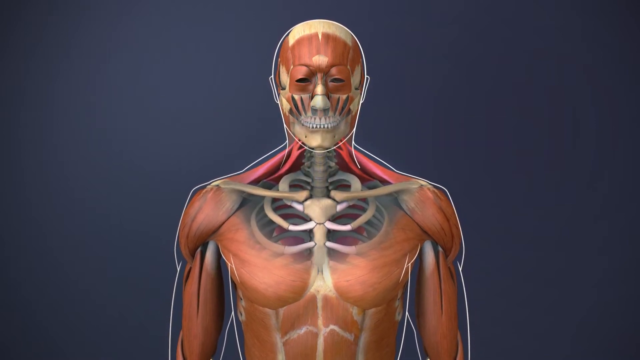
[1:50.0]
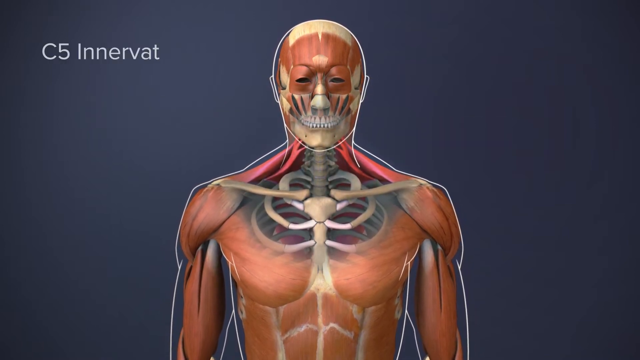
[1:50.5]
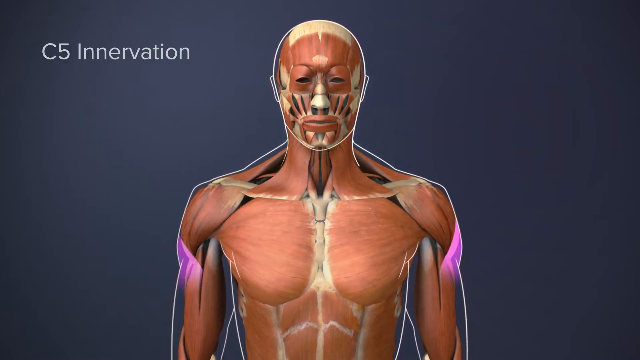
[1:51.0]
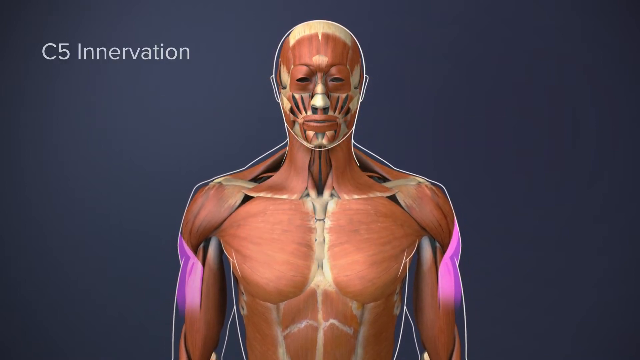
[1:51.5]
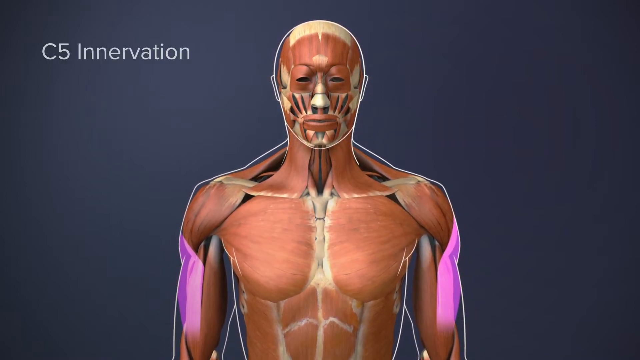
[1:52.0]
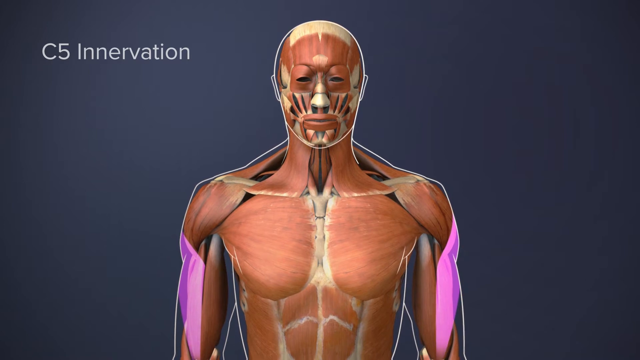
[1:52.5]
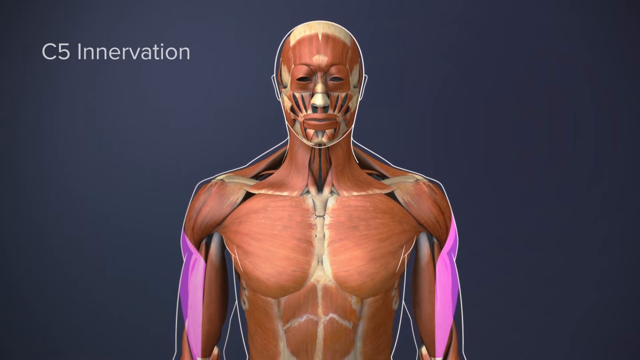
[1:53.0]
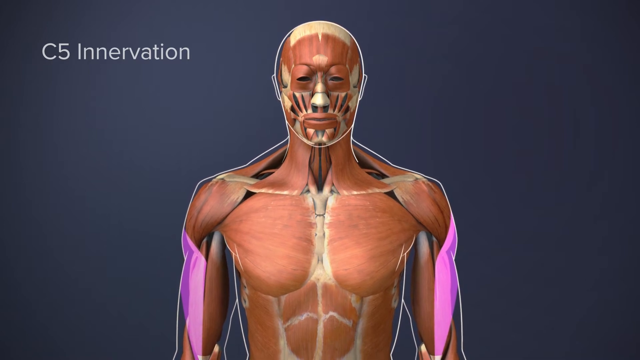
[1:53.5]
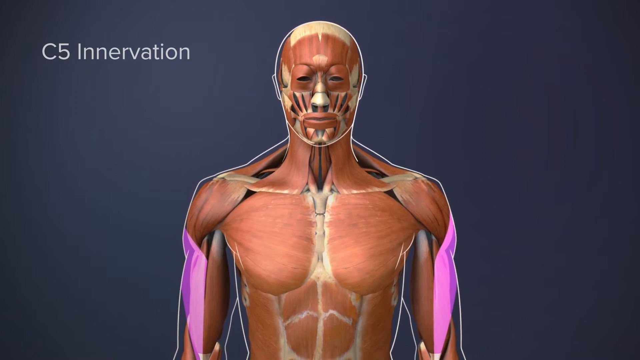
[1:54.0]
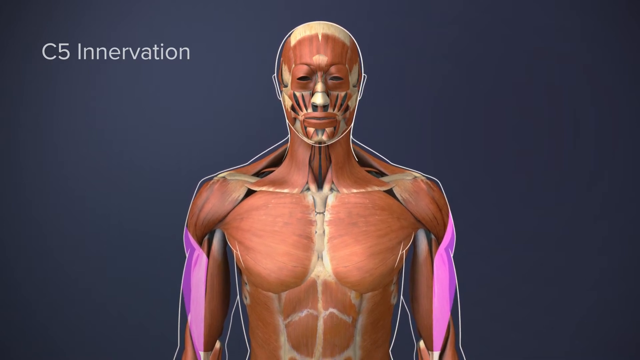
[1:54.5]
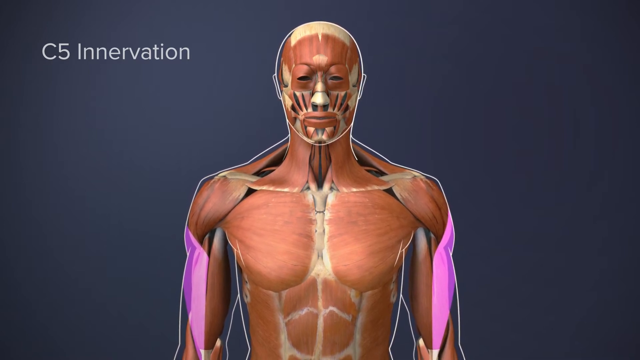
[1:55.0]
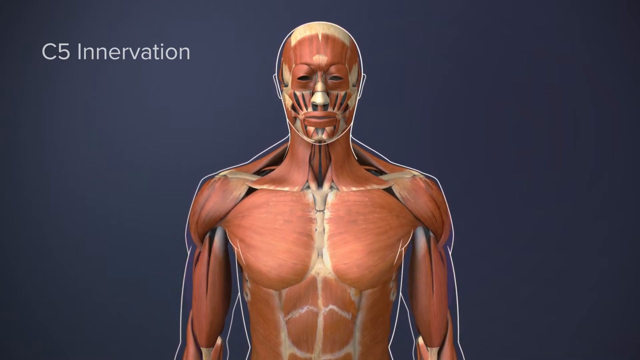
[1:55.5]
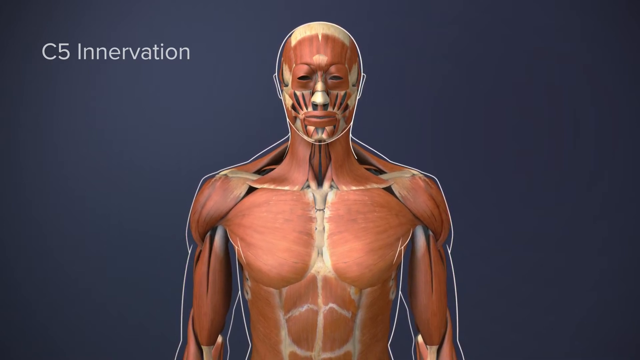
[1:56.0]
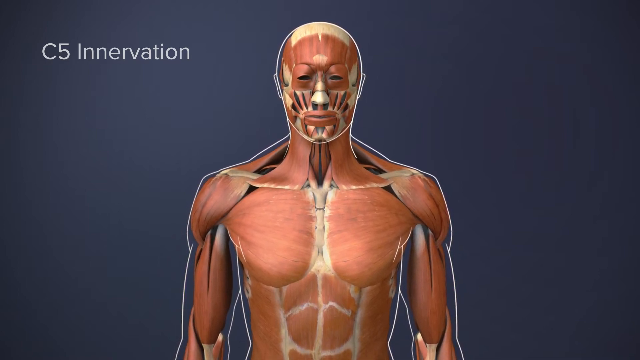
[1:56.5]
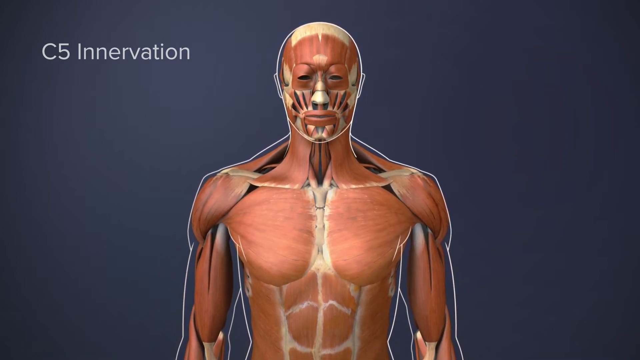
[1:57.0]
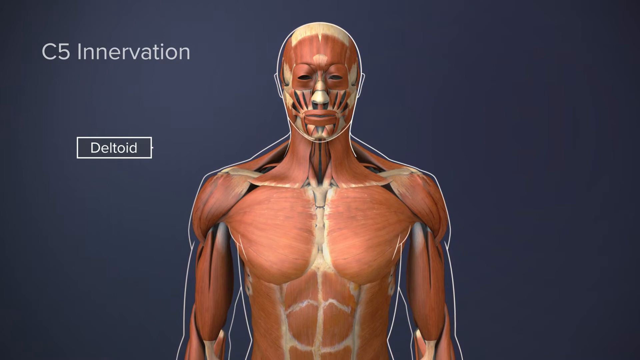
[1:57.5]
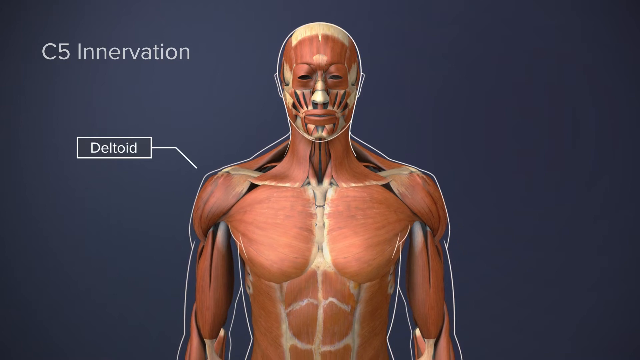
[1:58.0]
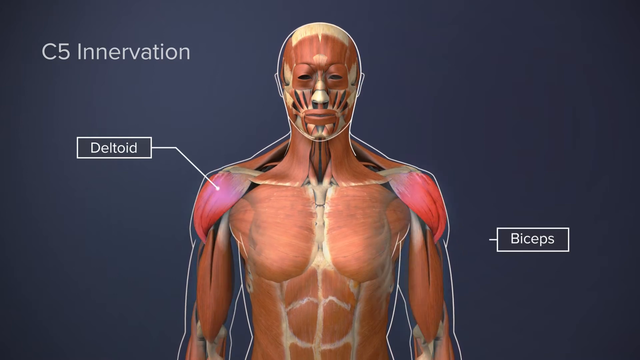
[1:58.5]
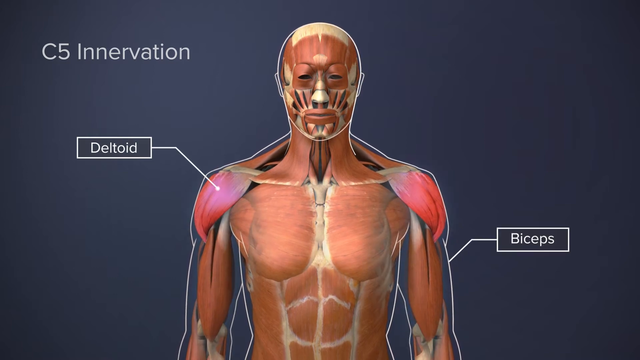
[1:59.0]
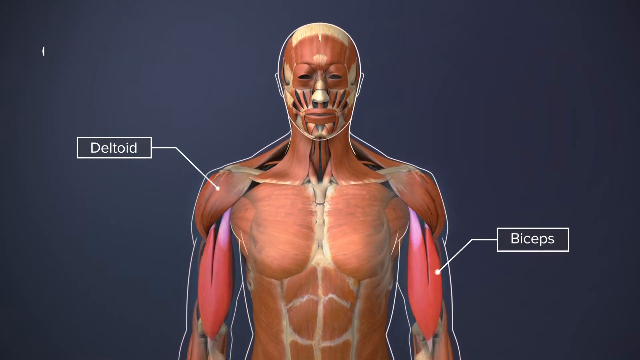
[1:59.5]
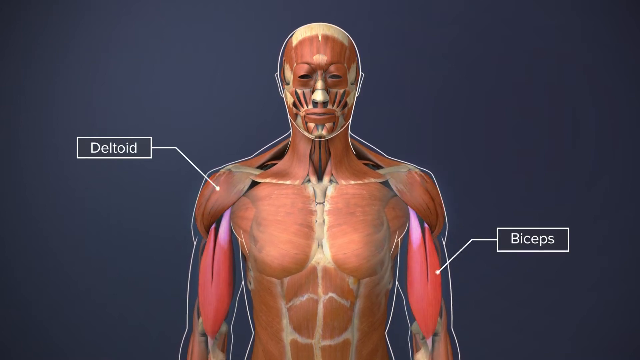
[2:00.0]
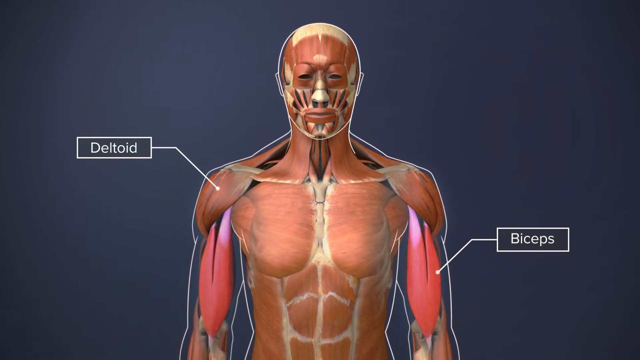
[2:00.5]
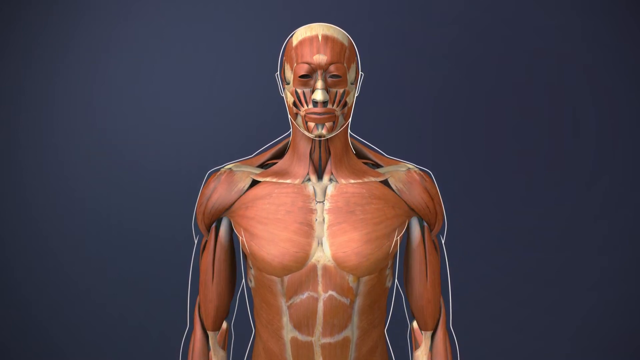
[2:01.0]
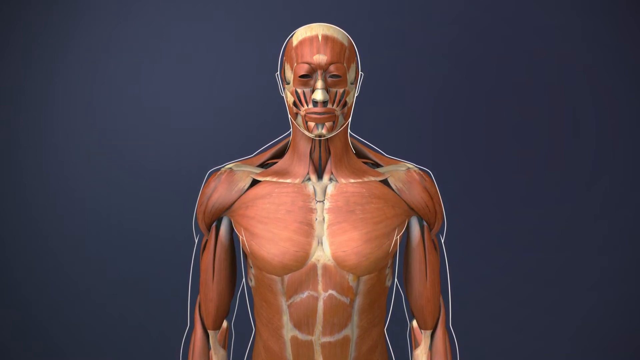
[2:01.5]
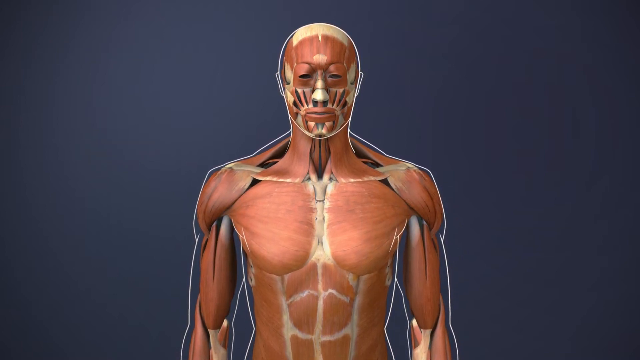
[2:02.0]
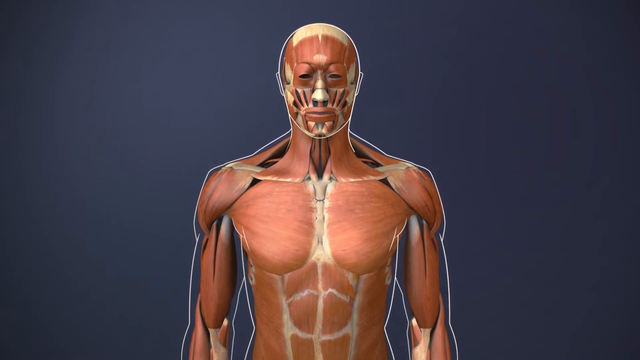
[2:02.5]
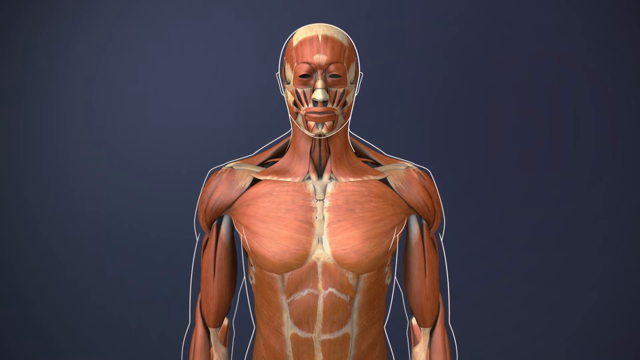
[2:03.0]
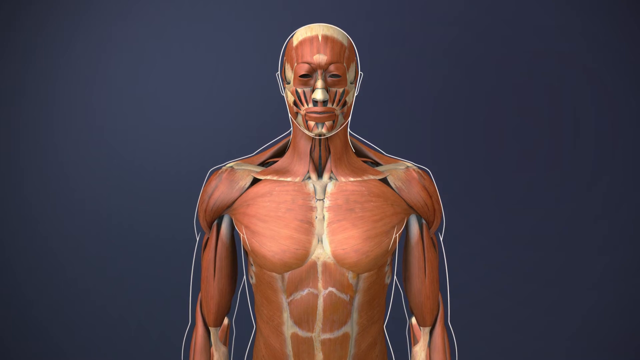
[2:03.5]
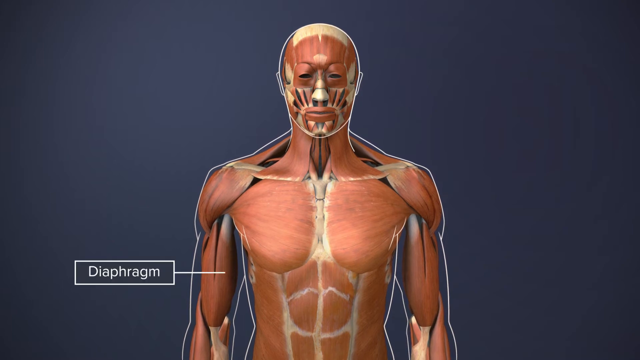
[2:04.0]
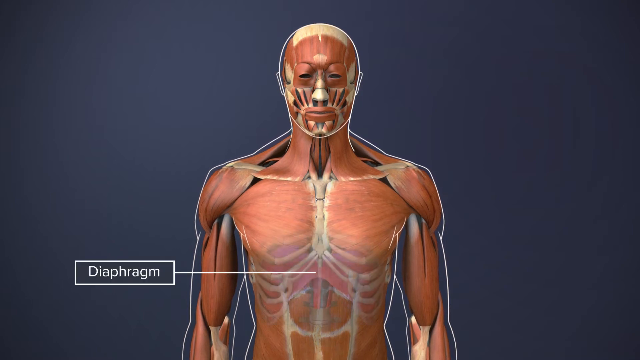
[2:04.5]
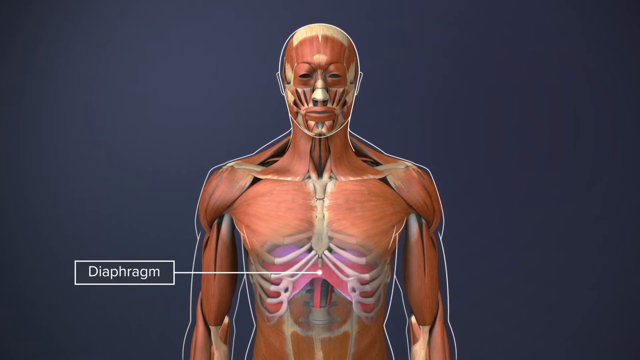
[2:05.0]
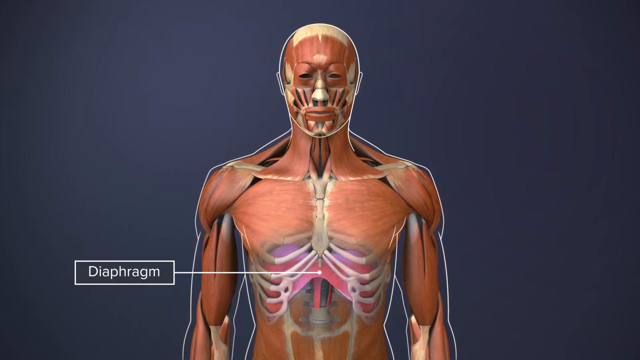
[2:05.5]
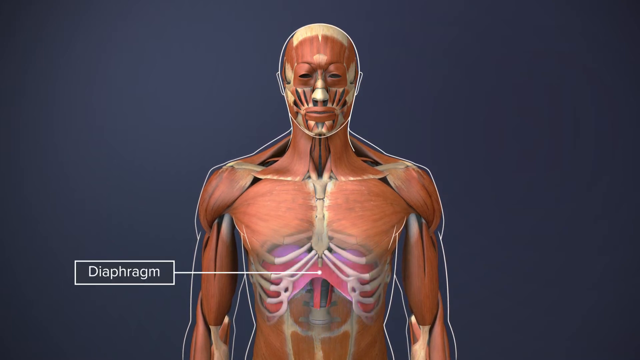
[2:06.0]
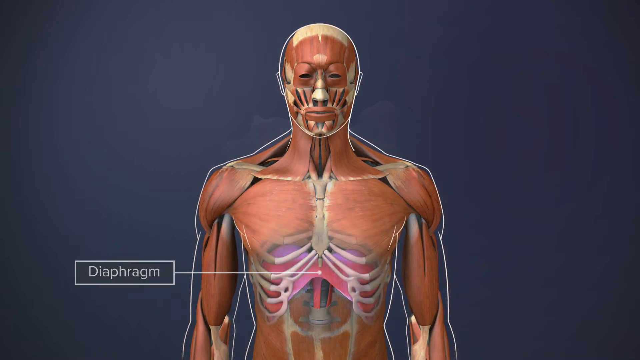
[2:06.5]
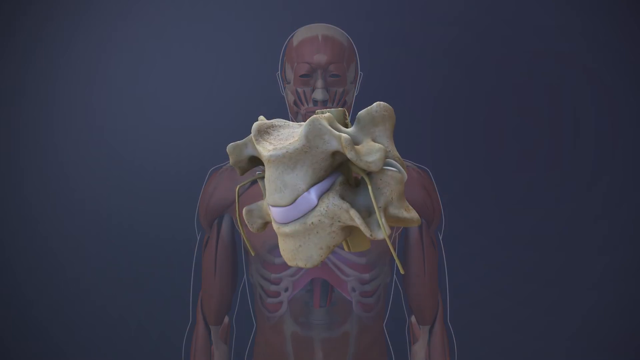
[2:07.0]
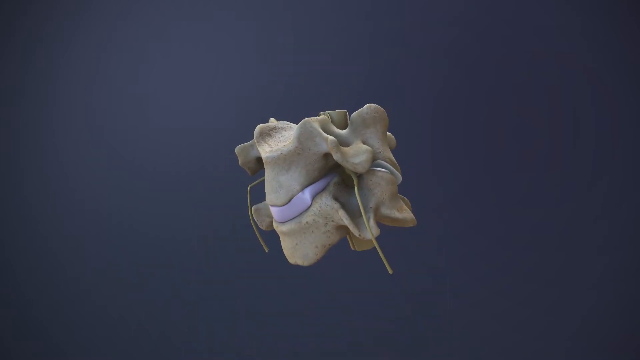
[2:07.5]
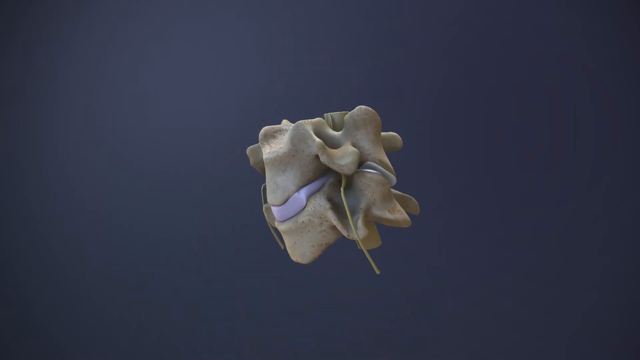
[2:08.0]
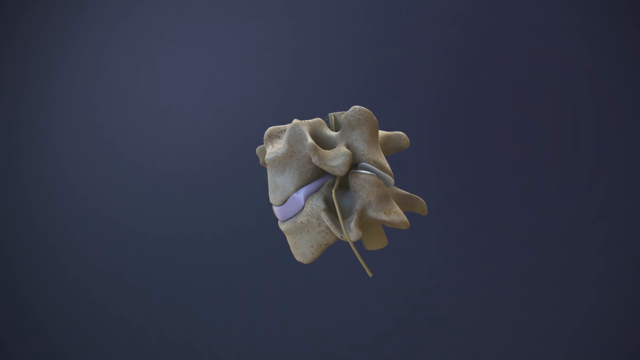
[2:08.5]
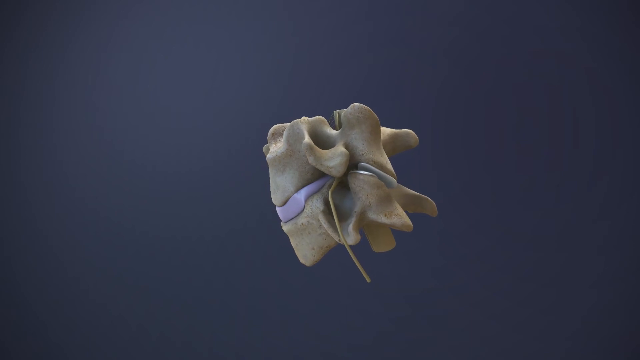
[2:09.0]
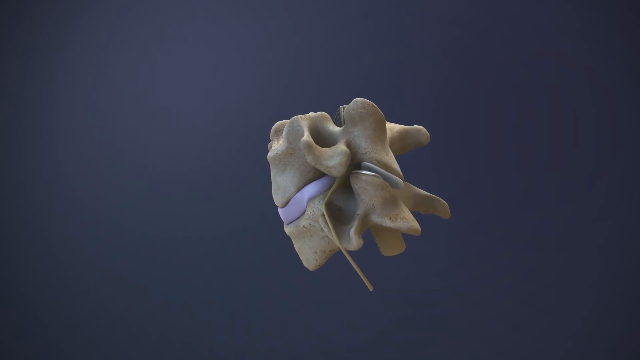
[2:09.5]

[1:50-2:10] Text in the upper left reads "C5 Innervation", and sections on the outside areas of both the right and left arms of the human body are highlighted light purple. The purple highlights disappear, and a label forms on the left side reading "deltoid", pointing to the left deltoid muscle. A label then forms on the right side reading "biceps", pointing to the right bicep muscle. These labels disappear and another label forms on the bottom left reading "Diaphragm", pointing to the middle area below the ribcage. The human body then disappears, and what looks like a part of the neck rotates to the left; it appears to be two vertebrae of the neck.